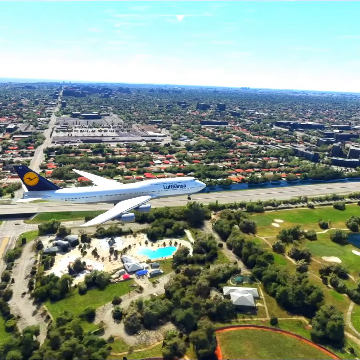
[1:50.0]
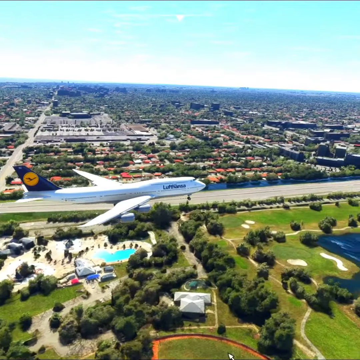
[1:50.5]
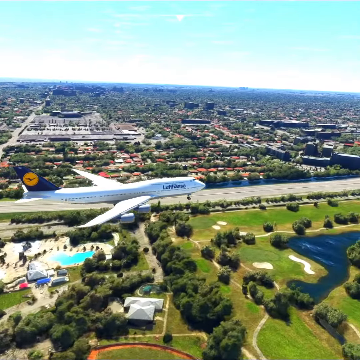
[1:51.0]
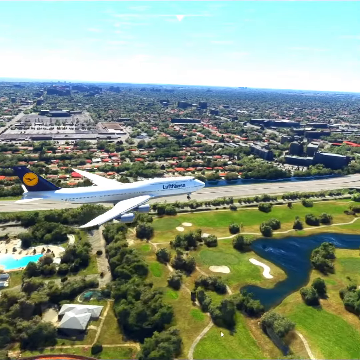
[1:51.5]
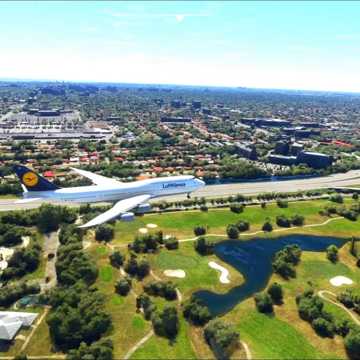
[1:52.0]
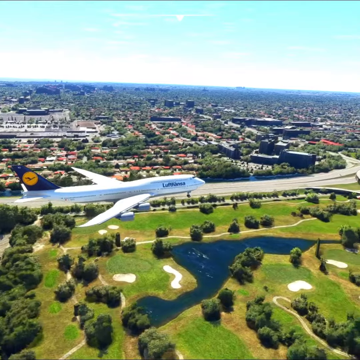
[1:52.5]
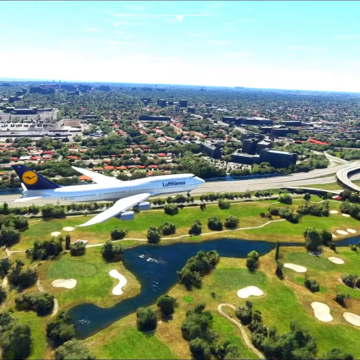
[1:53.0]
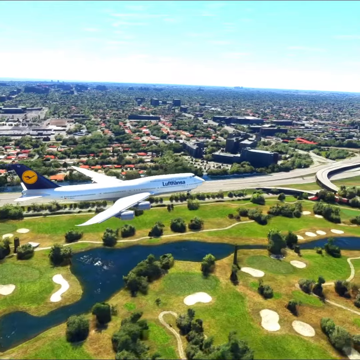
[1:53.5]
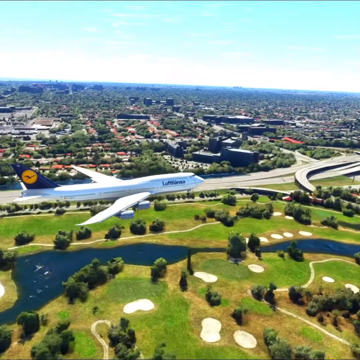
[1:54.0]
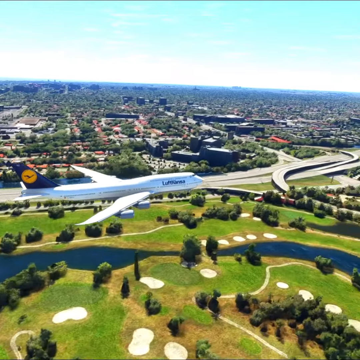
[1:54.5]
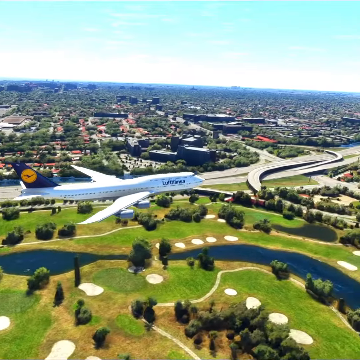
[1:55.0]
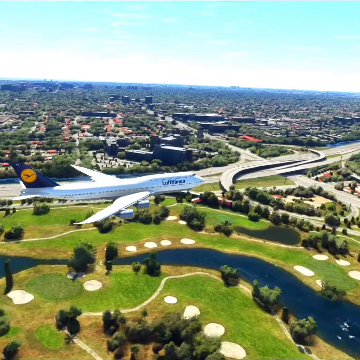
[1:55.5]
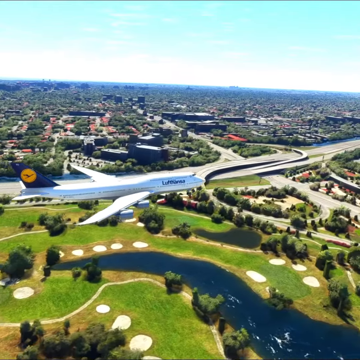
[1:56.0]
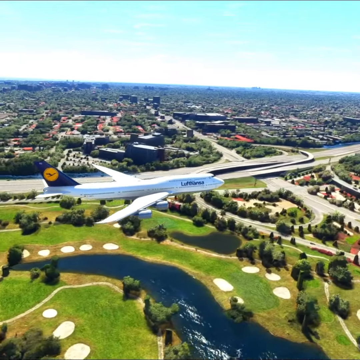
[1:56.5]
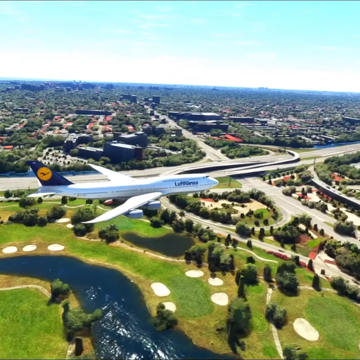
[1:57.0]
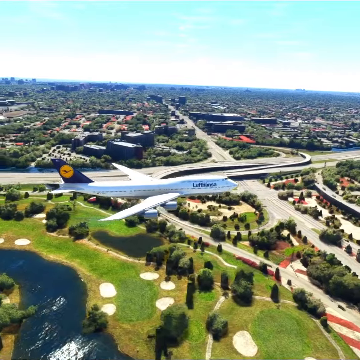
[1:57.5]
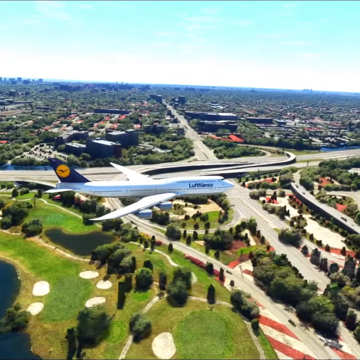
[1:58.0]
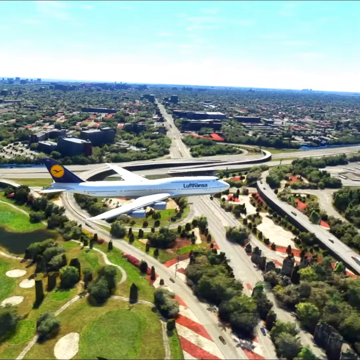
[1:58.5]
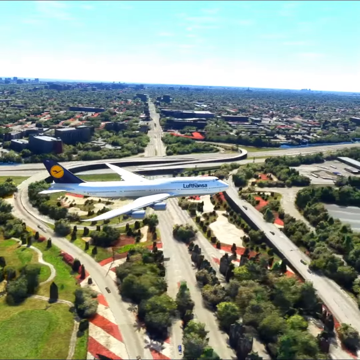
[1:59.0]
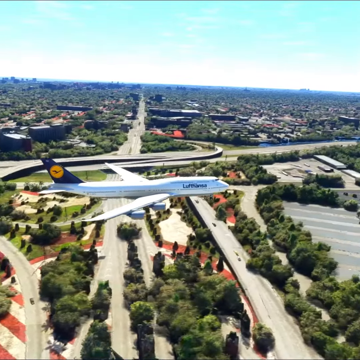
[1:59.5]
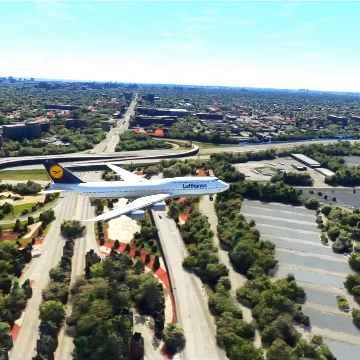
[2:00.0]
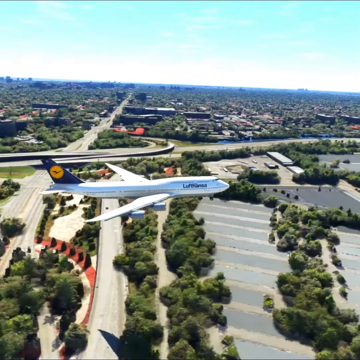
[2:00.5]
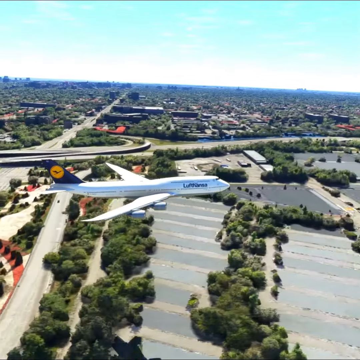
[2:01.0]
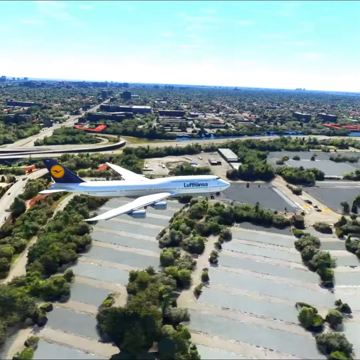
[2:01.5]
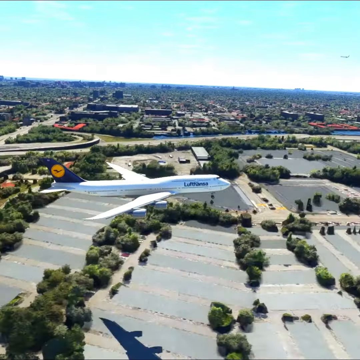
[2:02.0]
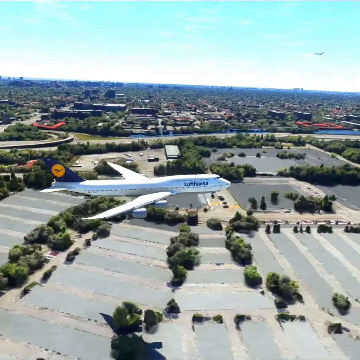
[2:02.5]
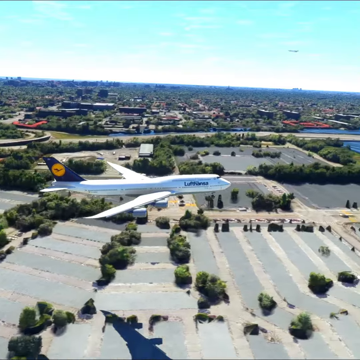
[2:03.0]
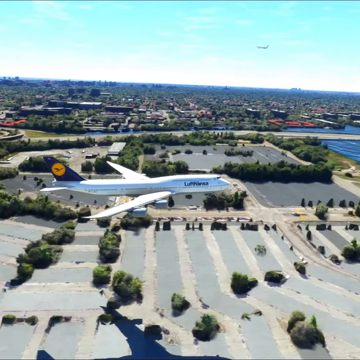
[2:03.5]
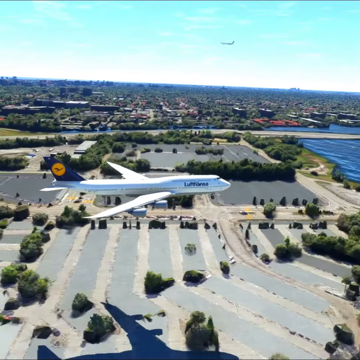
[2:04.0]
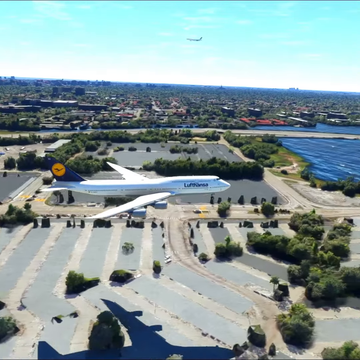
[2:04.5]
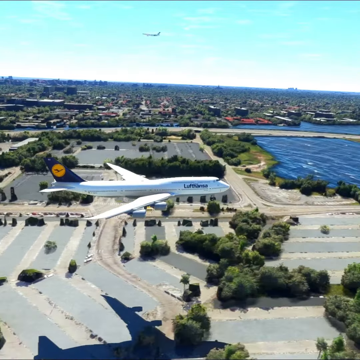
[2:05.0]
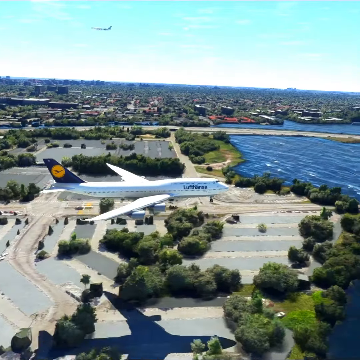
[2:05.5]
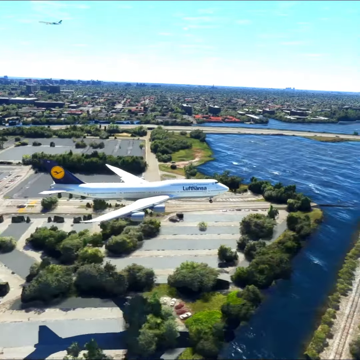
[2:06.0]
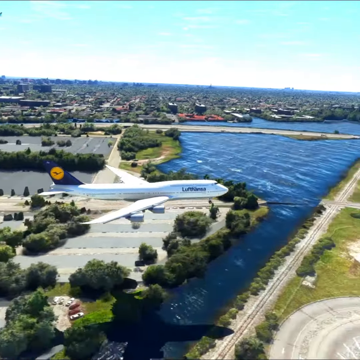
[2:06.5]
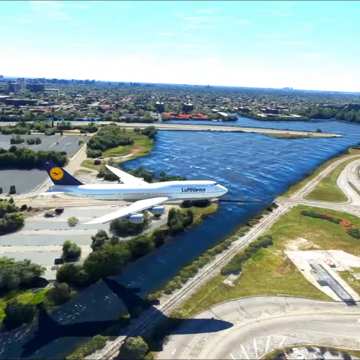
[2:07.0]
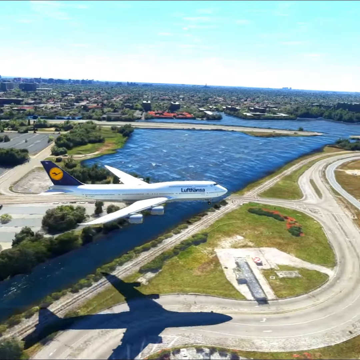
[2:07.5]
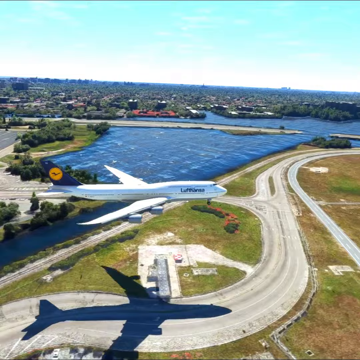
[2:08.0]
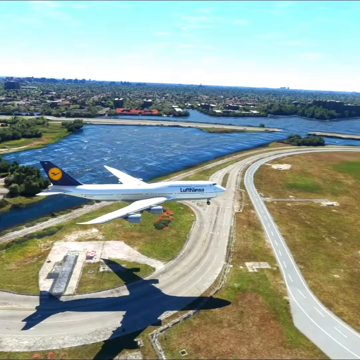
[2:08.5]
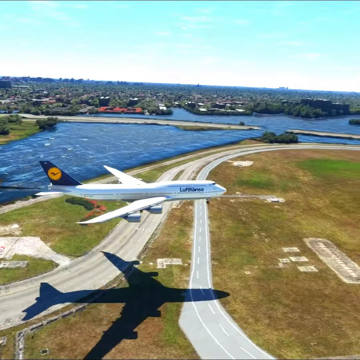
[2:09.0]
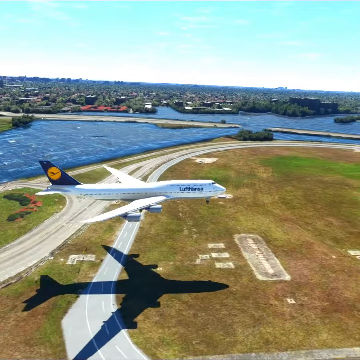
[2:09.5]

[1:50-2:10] The large white airliner, its landing gear down, travels low over a golf course. A river runs through the center of the golf course, which has green areas and green trees throughout, paths, and many sandy areas. A freeway runs along one side of the golf course, with a populated area across the freeway. The sky is light blue with wispy white clouds. After the golf course, the plane passes large paved areas that look like parking lots, with no vehicles in them and trees along the edges. The plane comes over water and crosses it, now flying even lower. Below are some paved areas that look like the end of a runway, and some grass with many brown areas that look dead within the green.